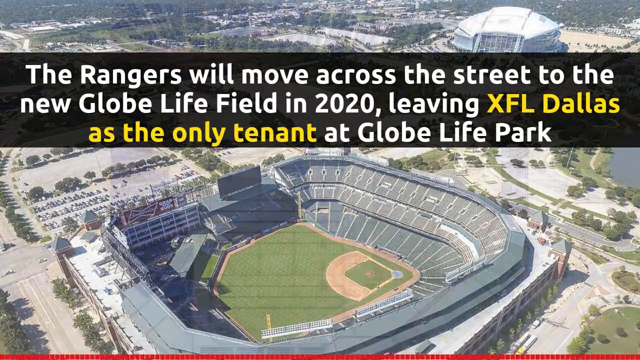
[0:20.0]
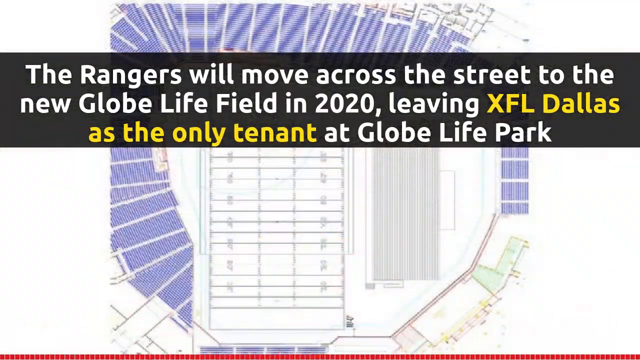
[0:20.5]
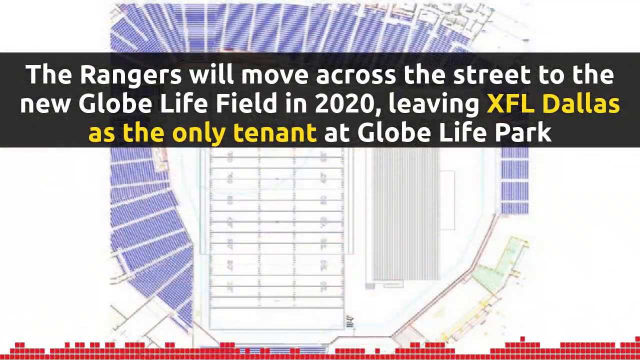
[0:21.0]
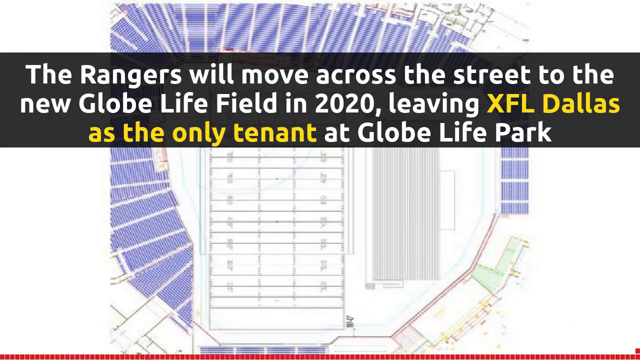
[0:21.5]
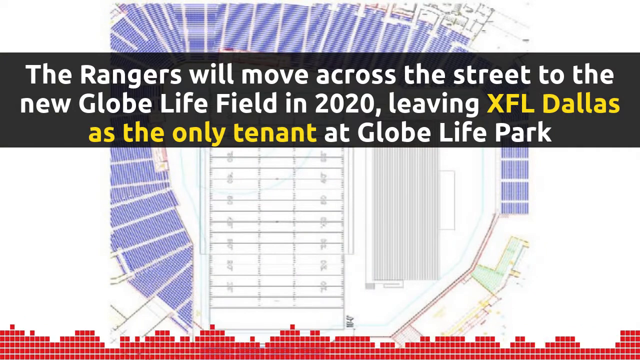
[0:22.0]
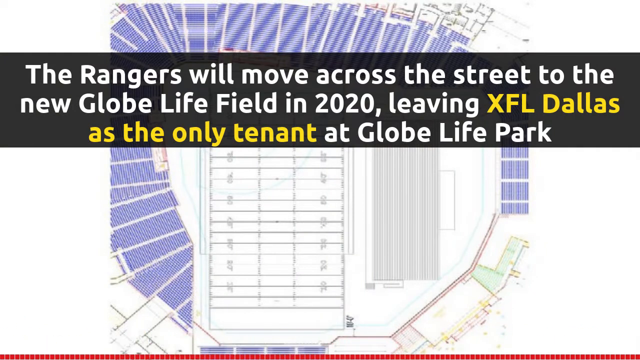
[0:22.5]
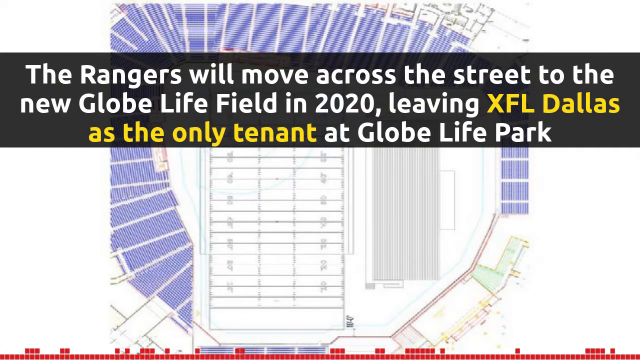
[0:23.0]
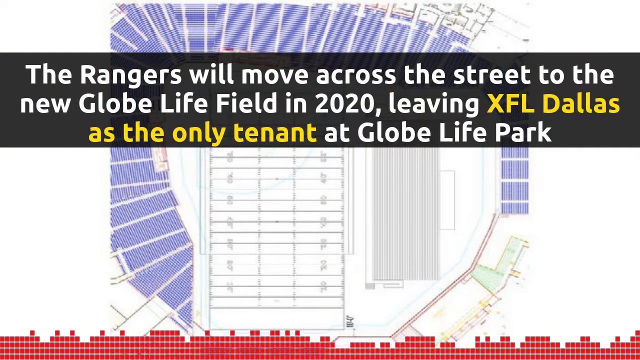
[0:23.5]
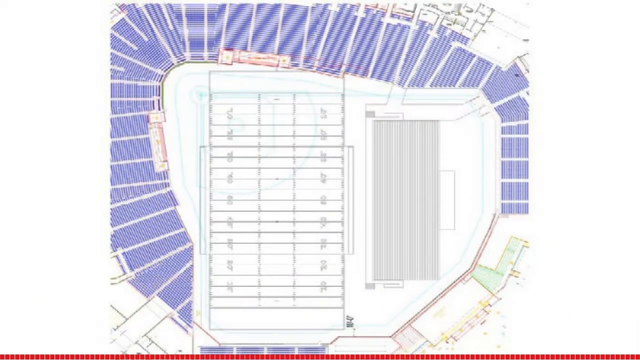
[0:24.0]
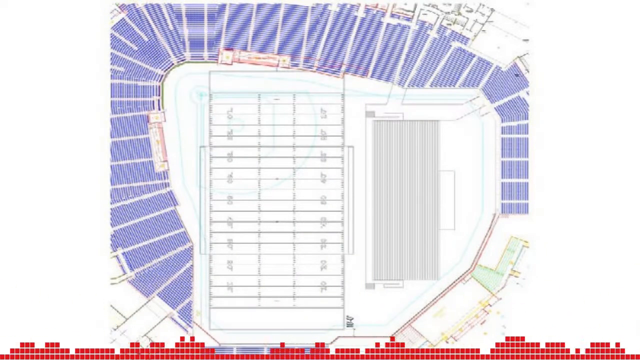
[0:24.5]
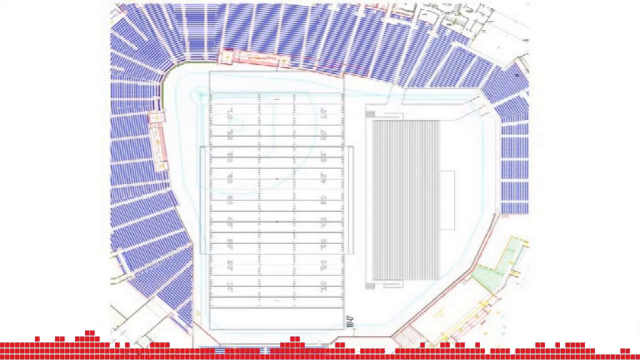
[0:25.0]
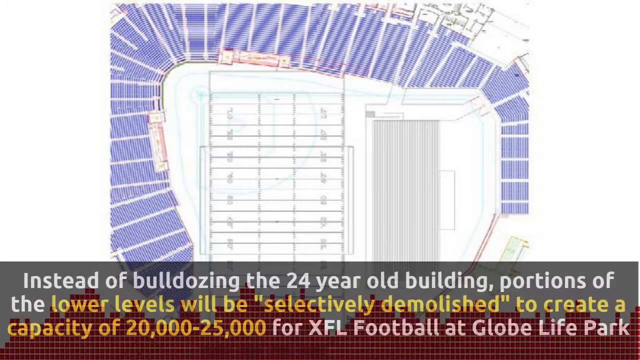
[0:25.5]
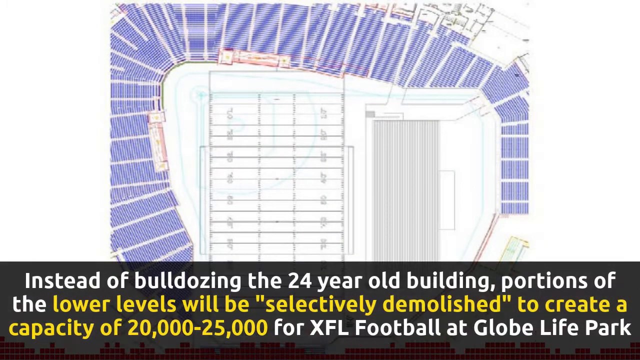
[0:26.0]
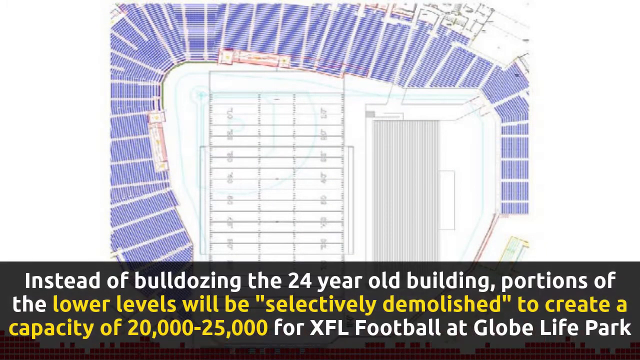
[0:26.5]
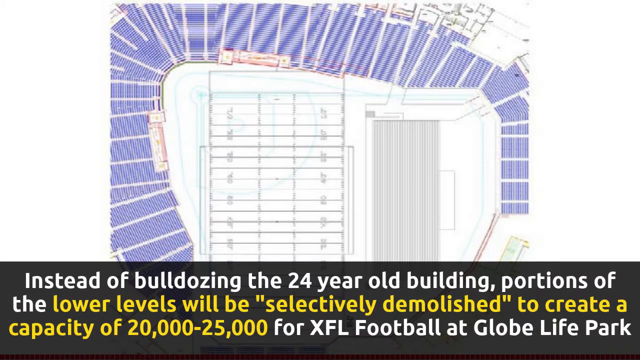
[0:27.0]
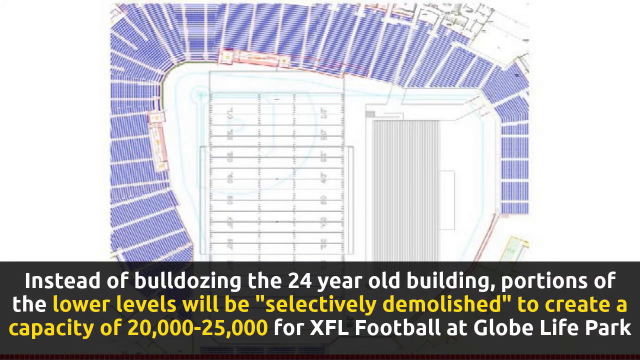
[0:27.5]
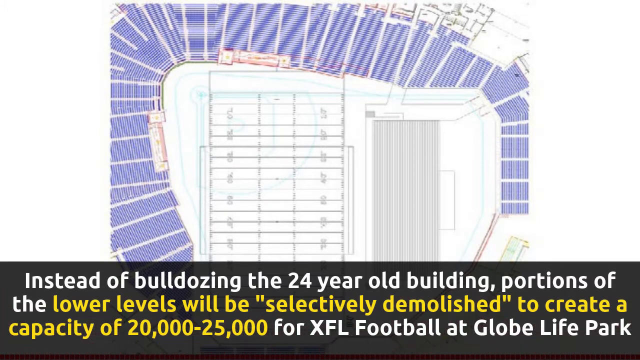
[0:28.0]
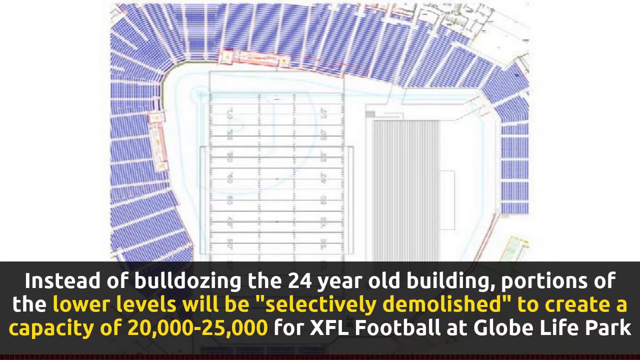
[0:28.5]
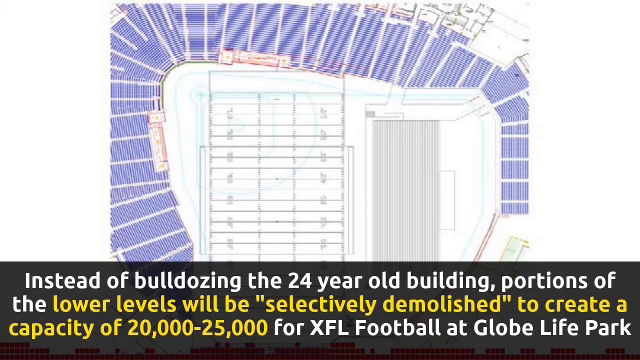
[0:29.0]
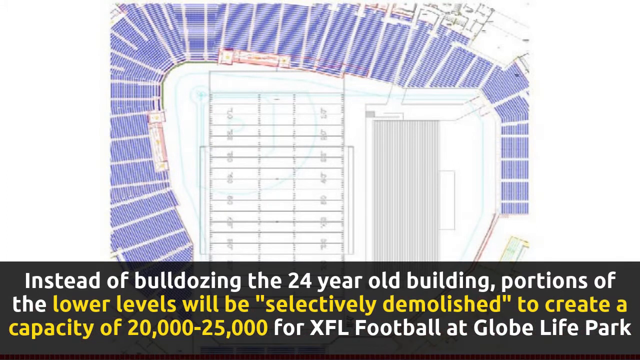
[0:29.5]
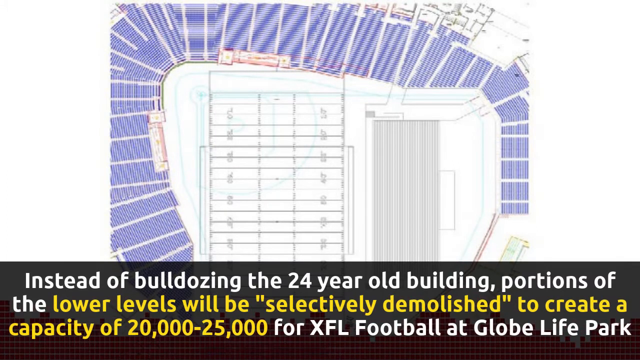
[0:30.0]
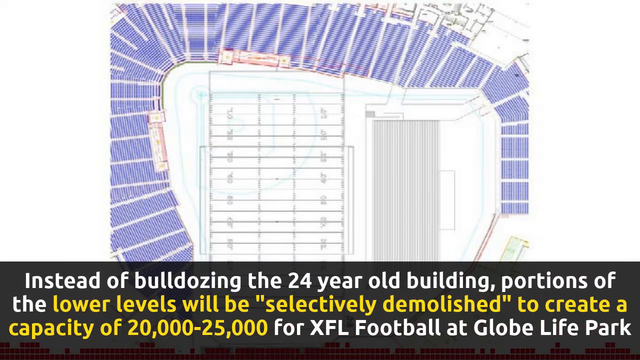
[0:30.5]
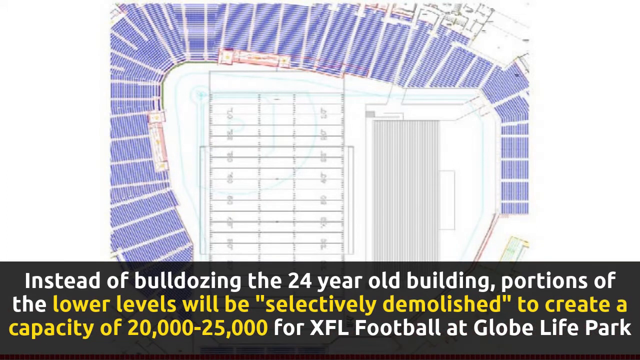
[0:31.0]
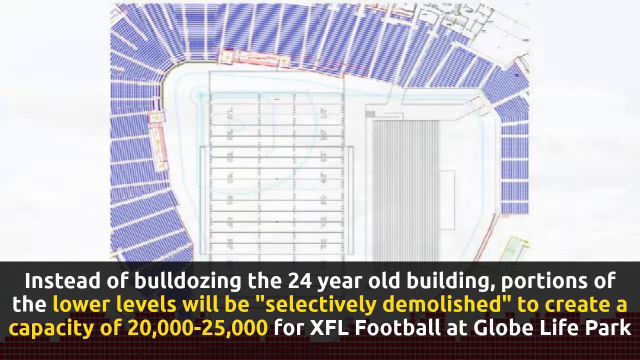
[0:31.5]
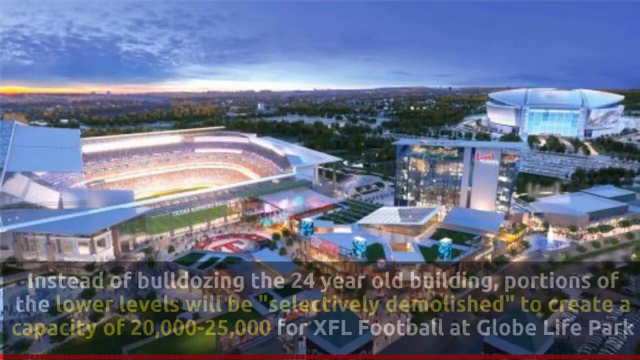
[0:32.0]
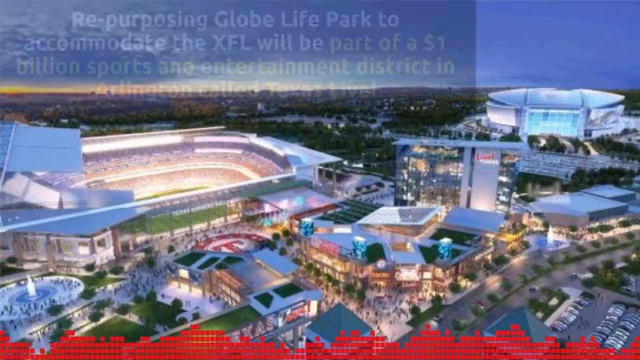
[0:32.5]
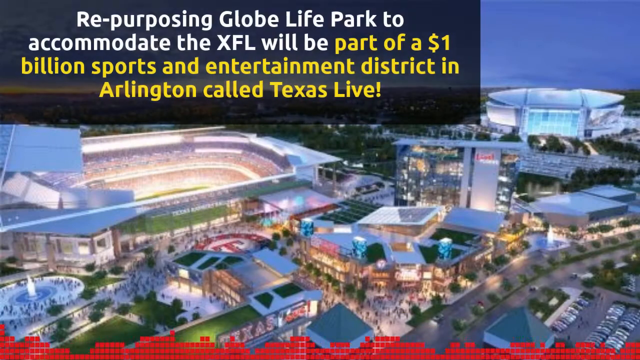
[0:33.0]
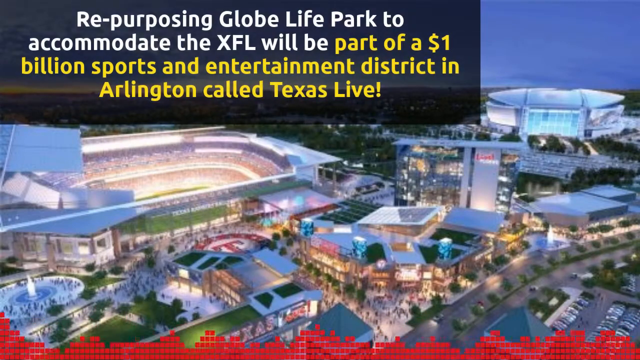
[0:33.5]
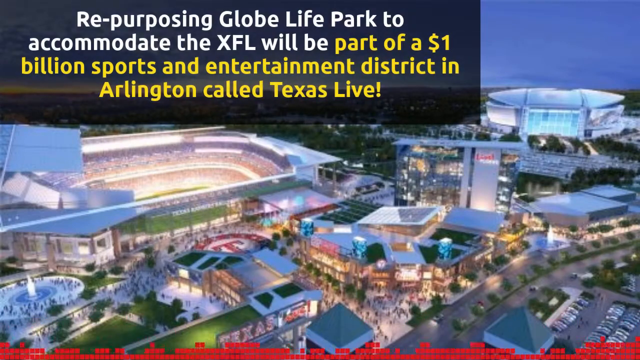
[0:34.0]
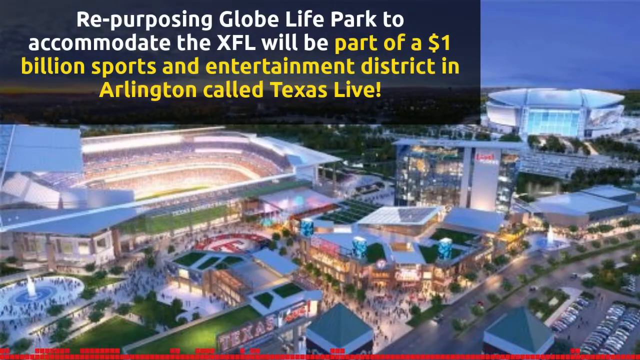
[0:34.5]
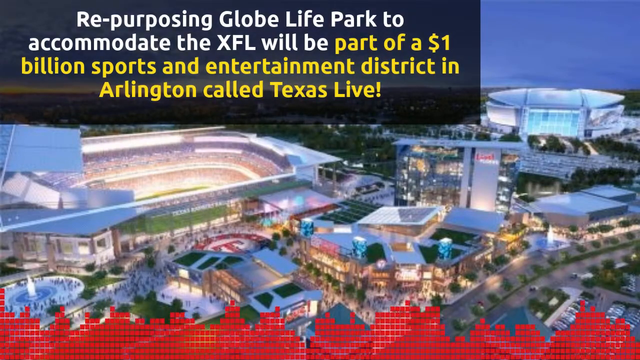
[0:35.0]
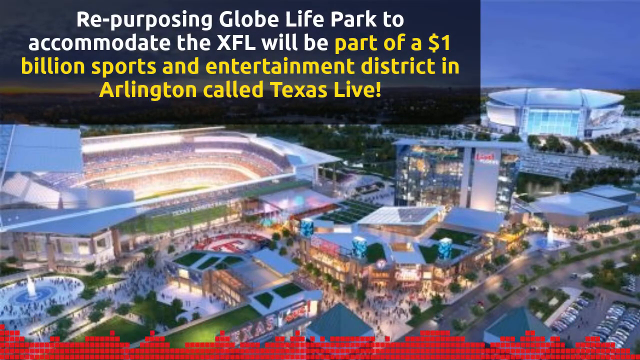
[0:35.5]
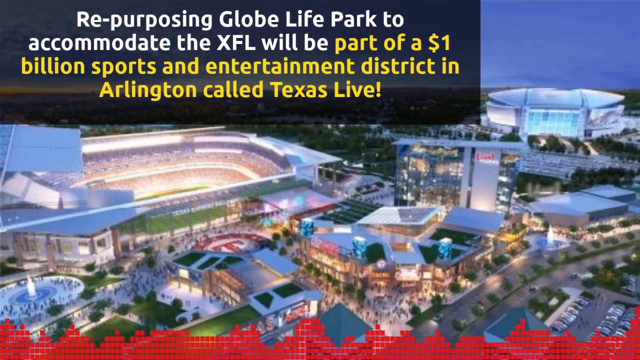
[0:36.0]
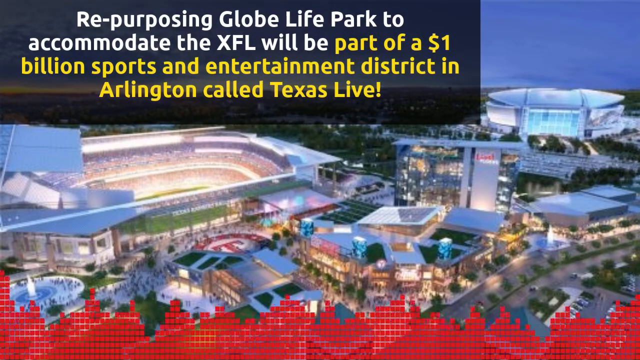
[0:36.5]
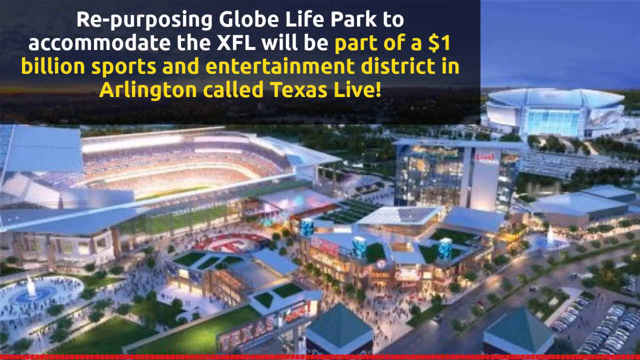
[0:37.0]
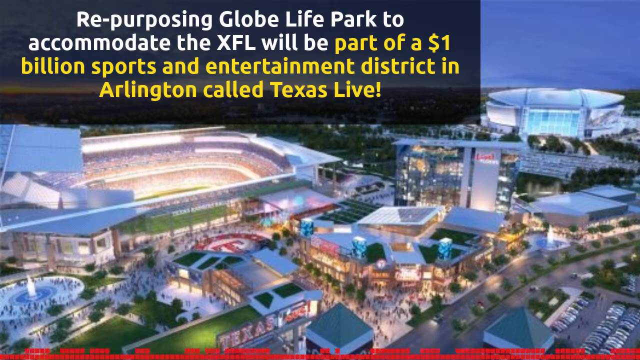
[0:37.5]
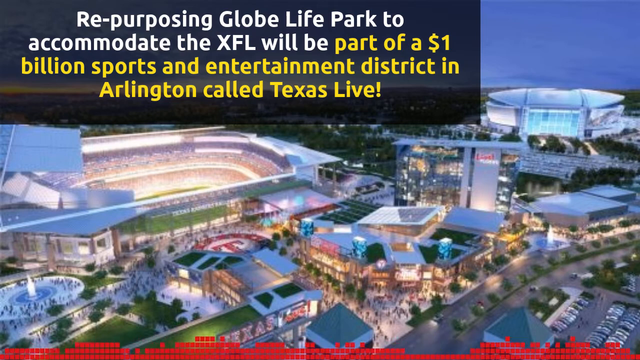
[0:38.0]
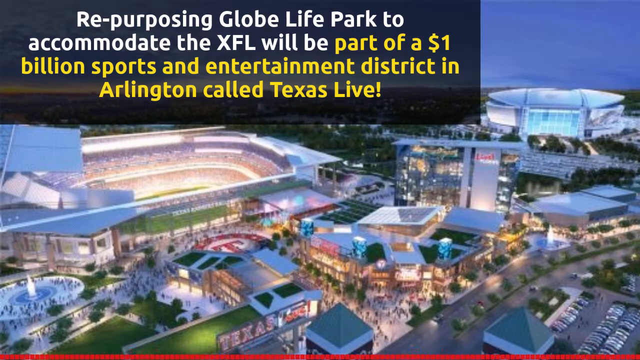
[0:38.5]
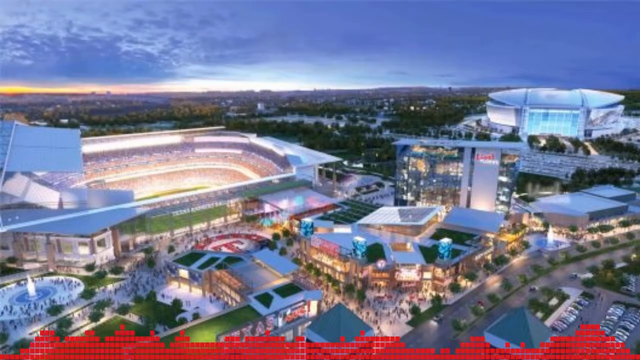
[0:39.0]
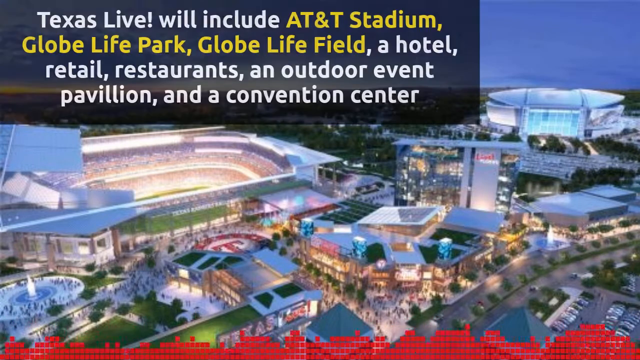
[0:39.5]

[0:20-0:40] The stadium is shown reconfigured with an American football pitch on it, the baseball diamond and mound having been removed. A digital image then shows many stadiums, conference centres and shopping malls, with a very big fountain and a large number of parked cars.